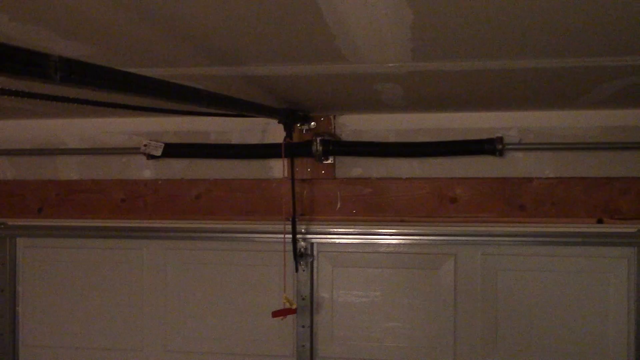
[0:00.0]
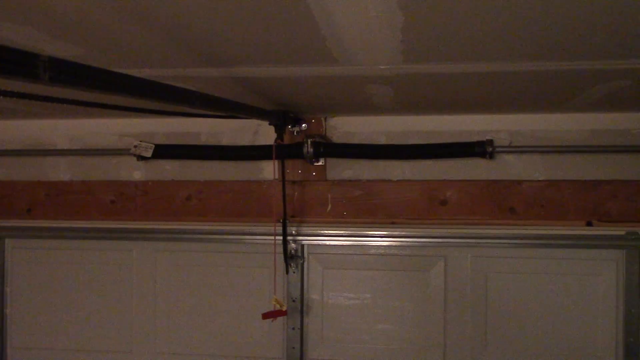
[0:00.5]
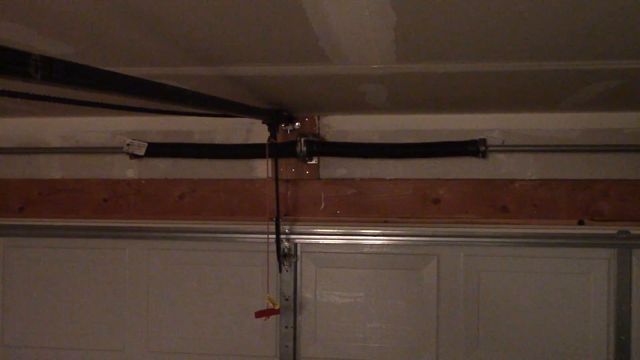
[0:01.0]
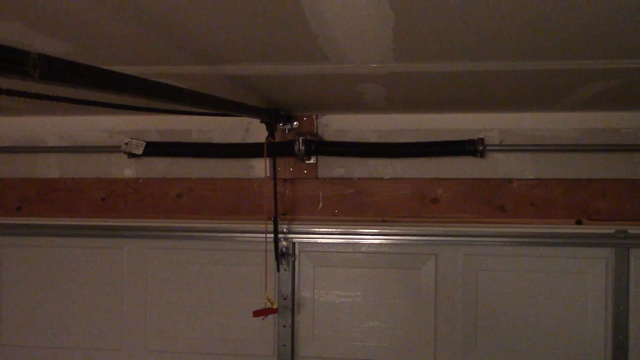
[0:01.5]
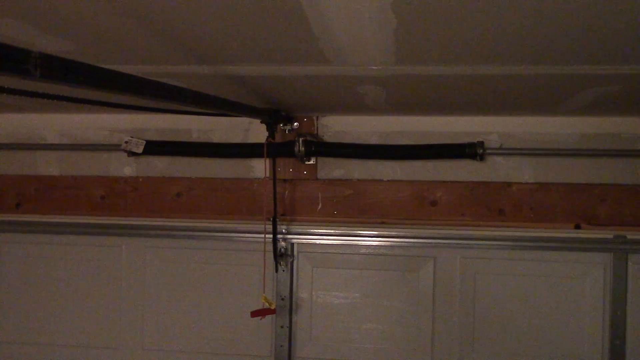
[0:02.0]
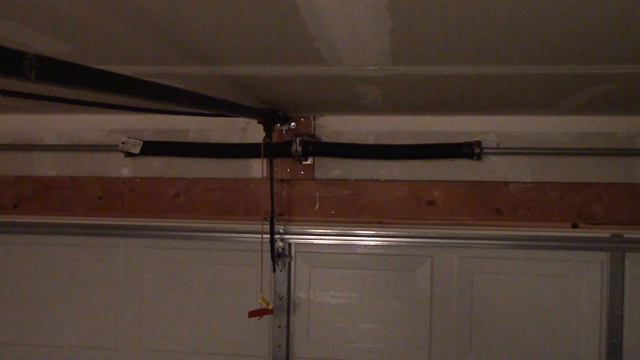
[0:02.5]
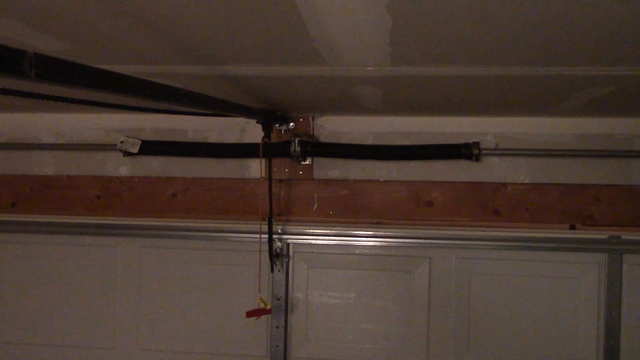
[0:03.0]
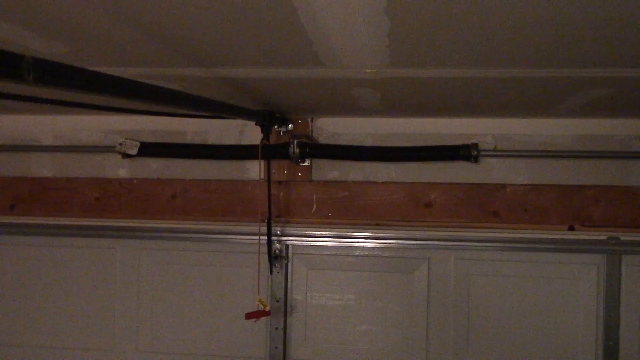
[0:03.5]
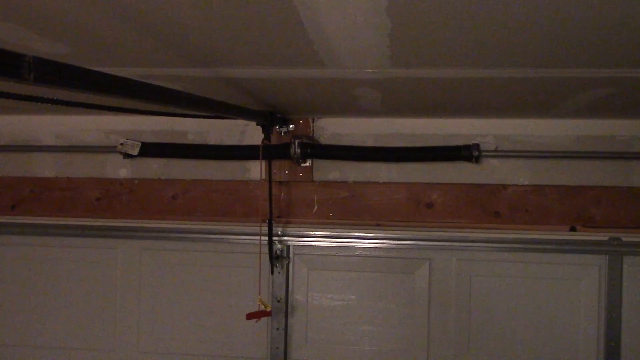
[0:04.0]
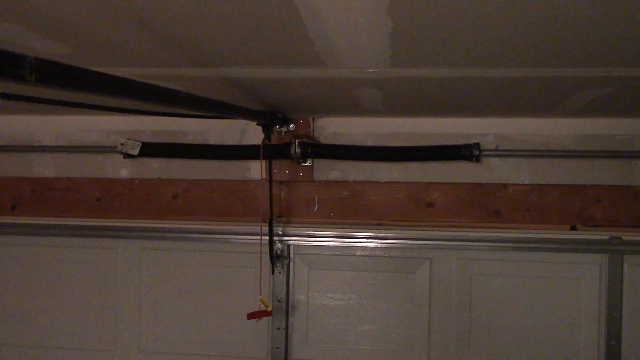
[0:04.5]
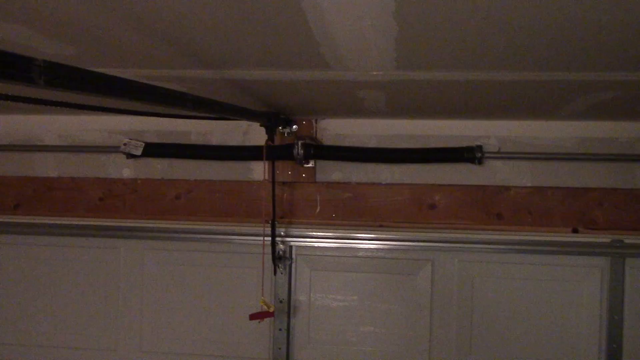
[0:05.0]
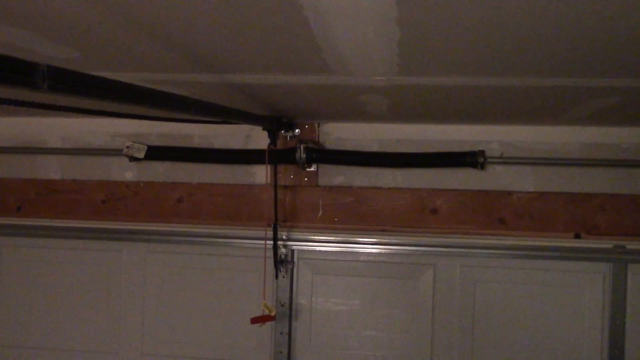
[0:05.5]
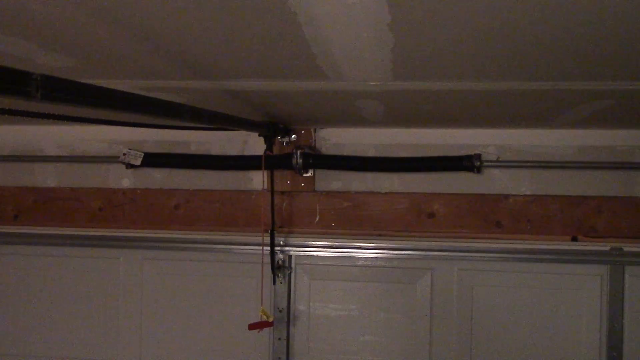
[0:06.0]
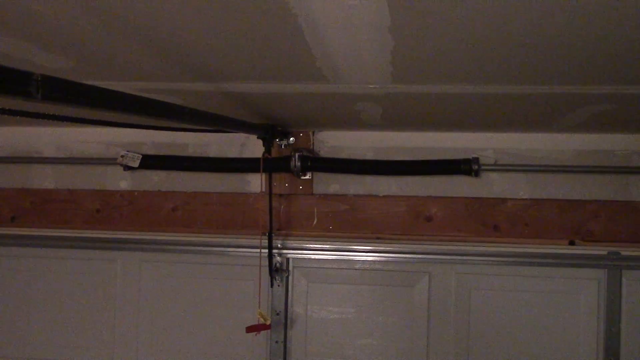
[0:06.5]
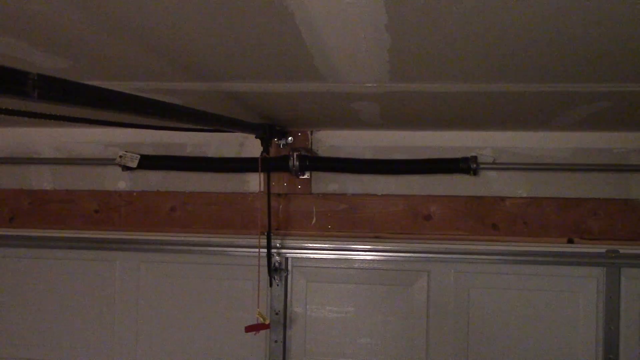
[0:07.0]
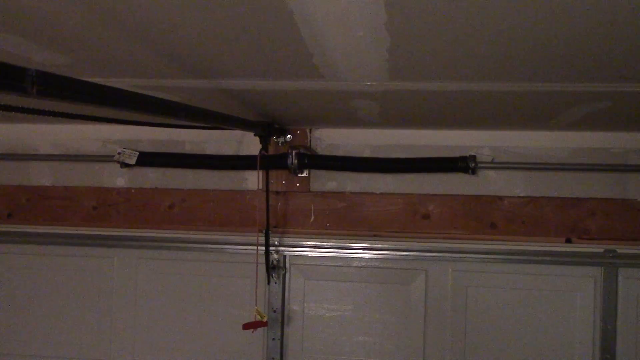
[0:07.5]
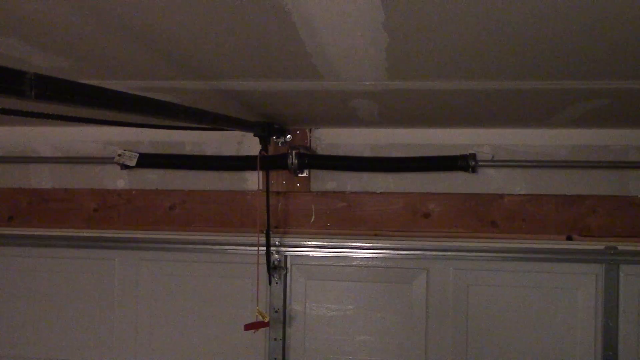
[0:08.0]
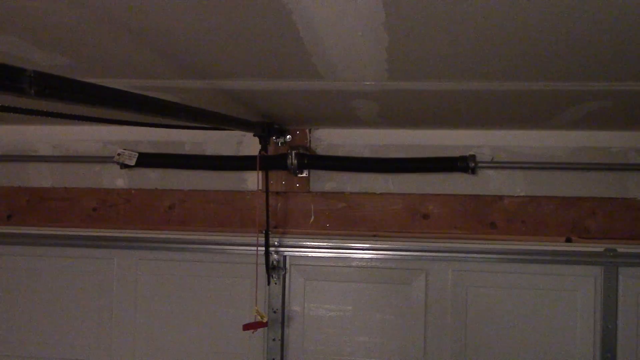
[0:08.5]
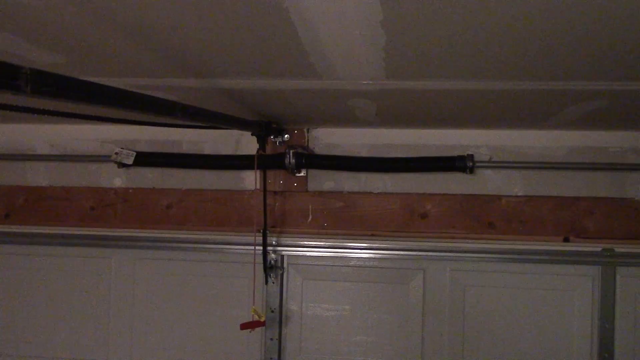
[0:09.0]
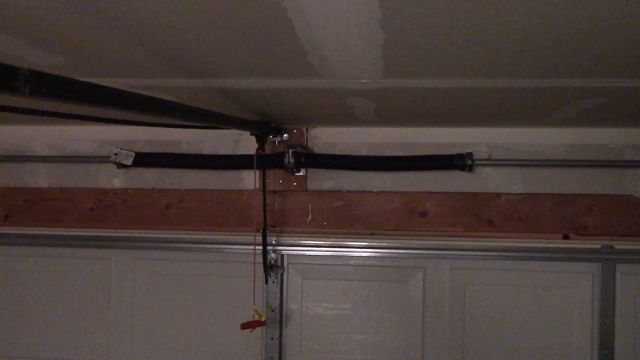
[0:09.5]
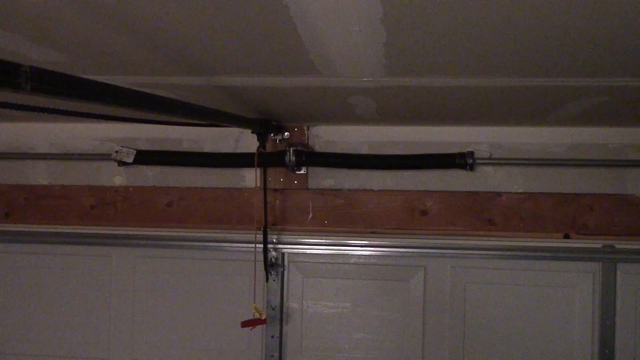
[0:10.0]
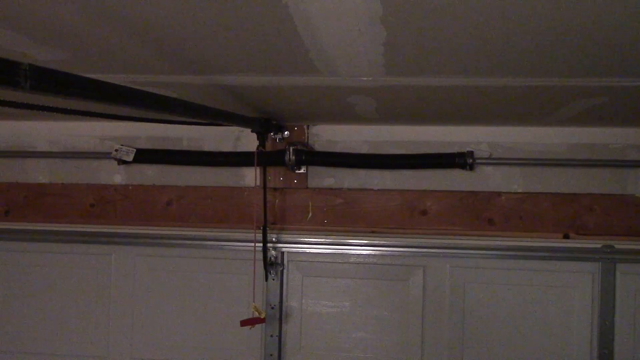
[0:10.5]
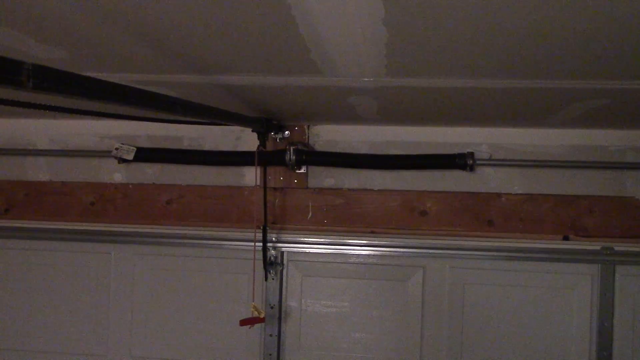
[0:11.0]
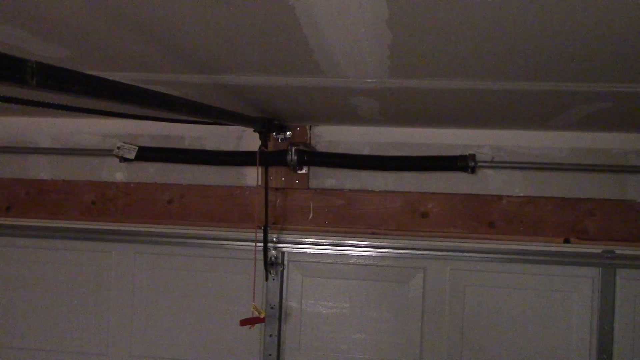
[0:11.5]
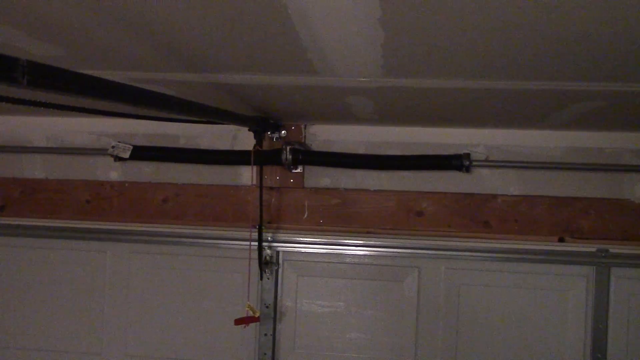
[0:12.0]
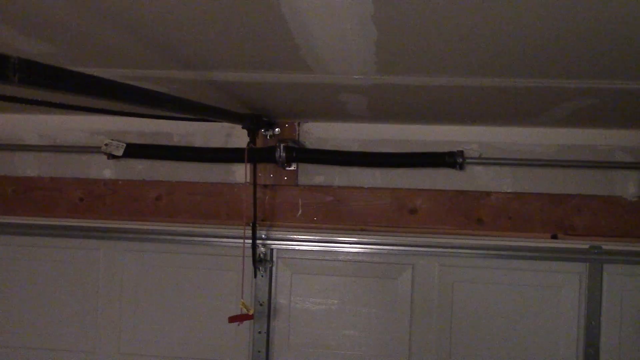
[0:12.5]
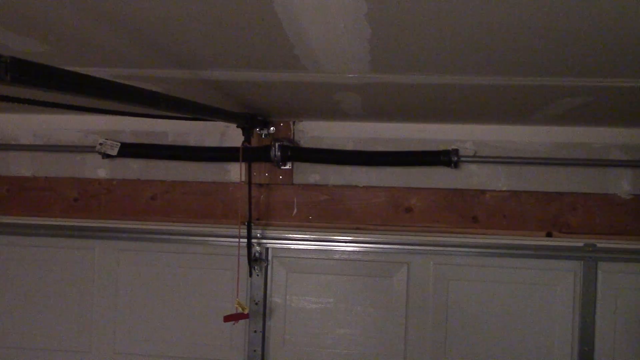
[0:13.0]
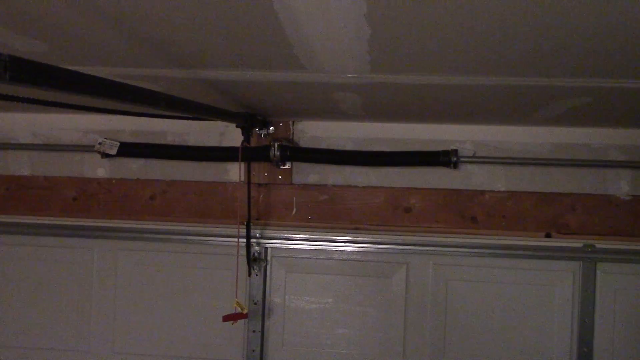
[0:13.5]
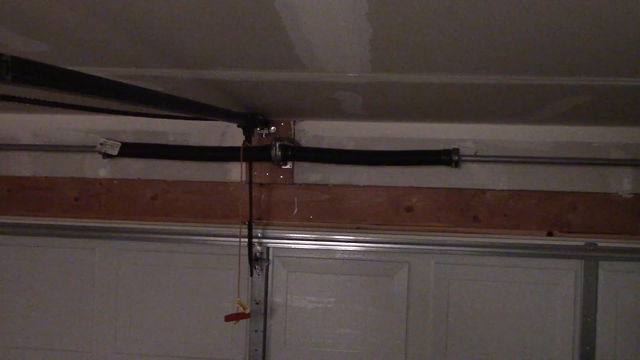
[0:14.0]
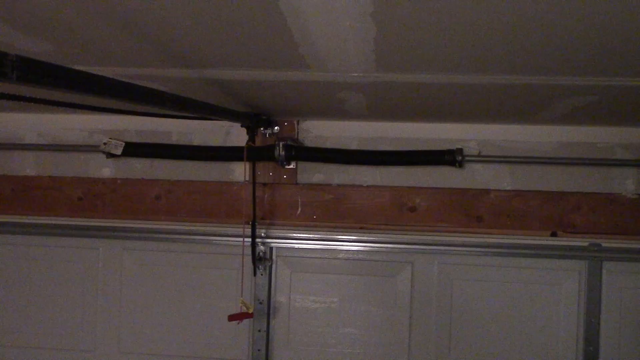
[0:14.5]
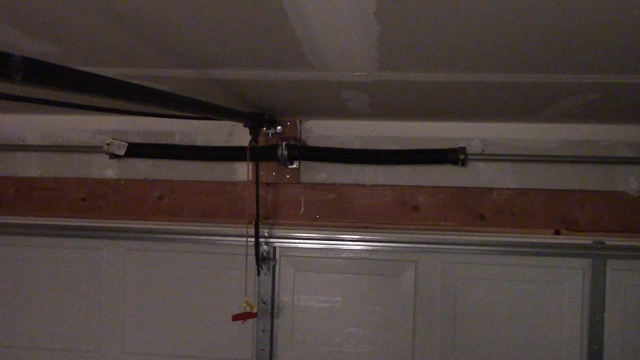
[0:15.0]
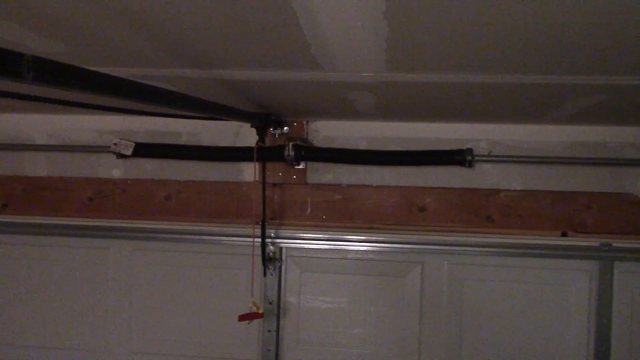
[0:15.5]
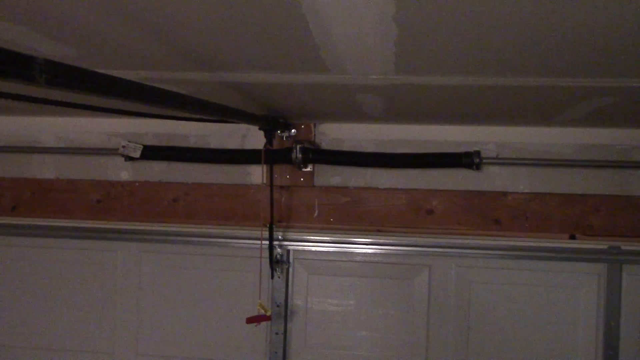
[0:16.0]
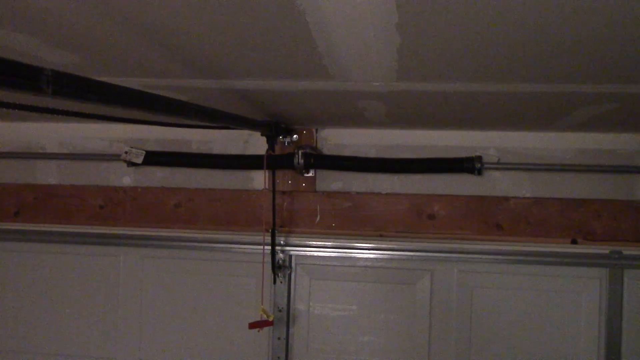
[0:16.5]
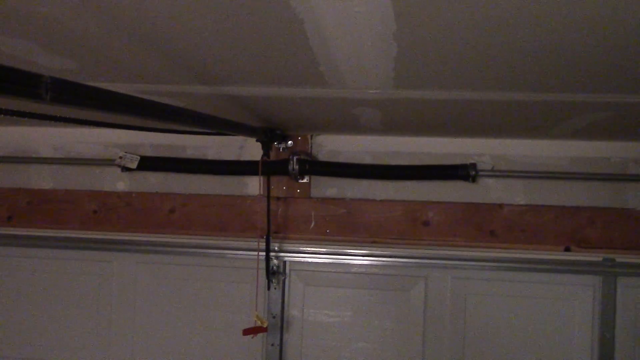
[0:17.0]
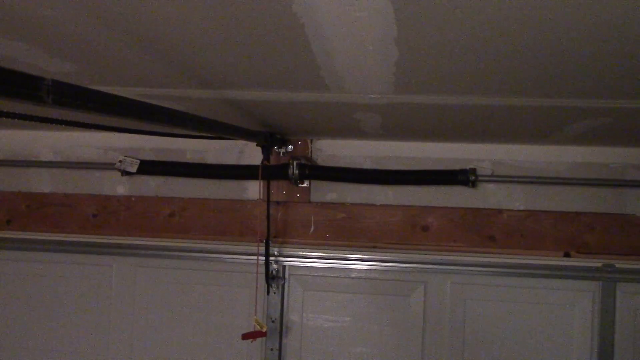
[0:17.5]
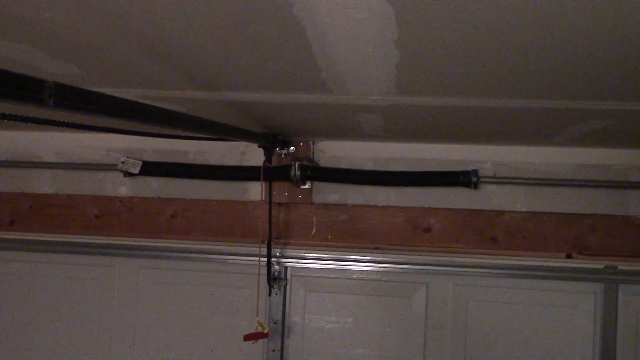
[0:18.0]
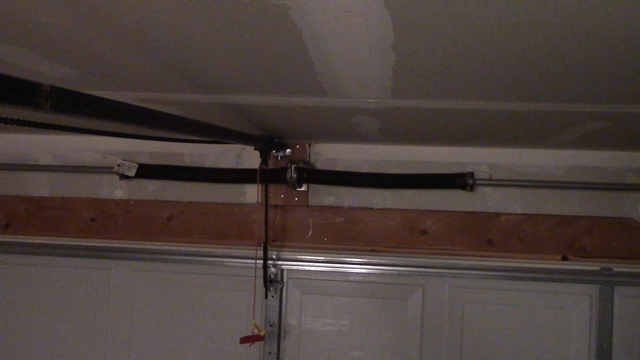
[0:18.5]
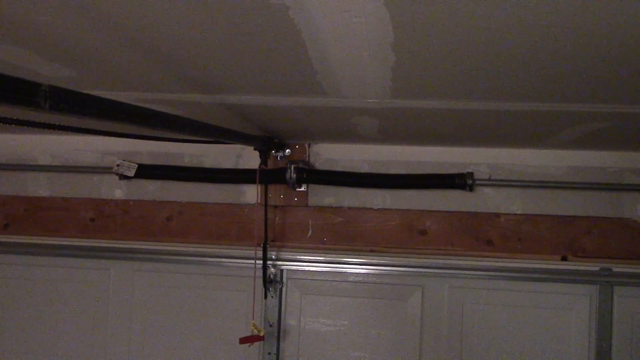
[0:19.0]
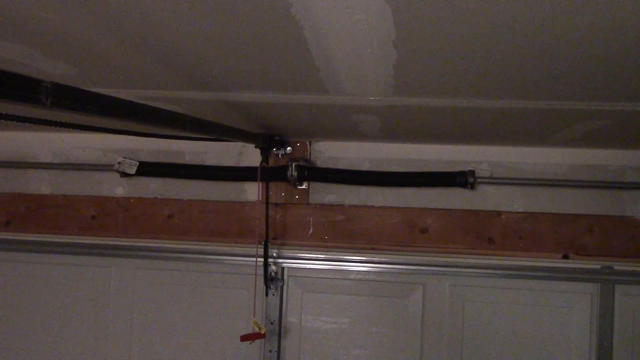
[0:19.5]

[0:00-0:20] The footage has very little color and an old-fashioned look. From inside a garage, the view is of the top of a garage door opener and the ceiling right above the garage door, where the pulley system would be. The ceiling is not painted overall, though there is some paint between the drywall sheets. The camera is very shaky and not mounted anywhere. Nothing else happens in the frame; it looks to be a one-car garage door opener. A piece of wood is above the garage door, apparently for looks, and otherwise the garage appears to be unfinished.